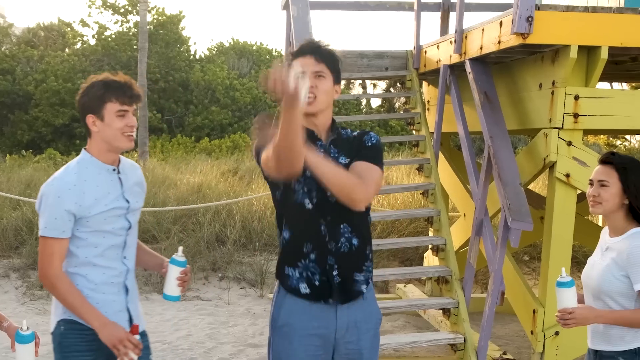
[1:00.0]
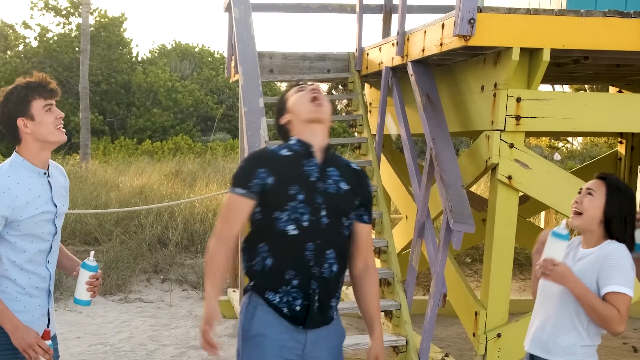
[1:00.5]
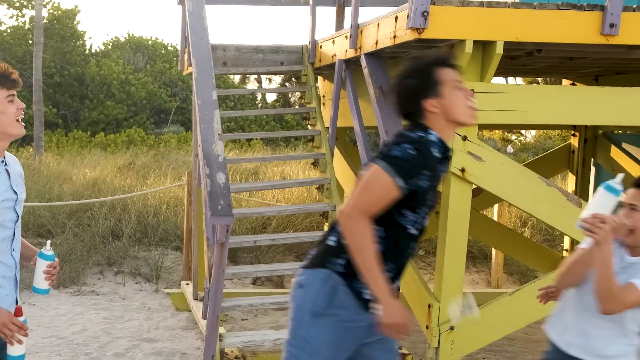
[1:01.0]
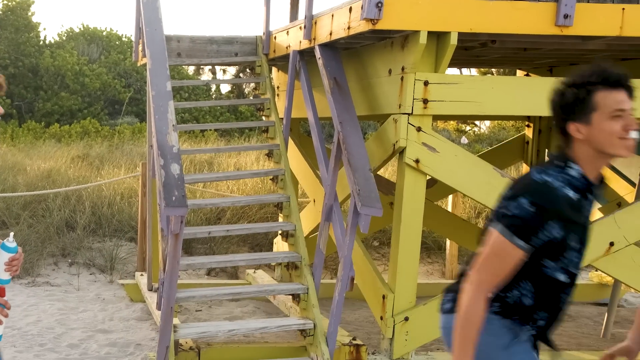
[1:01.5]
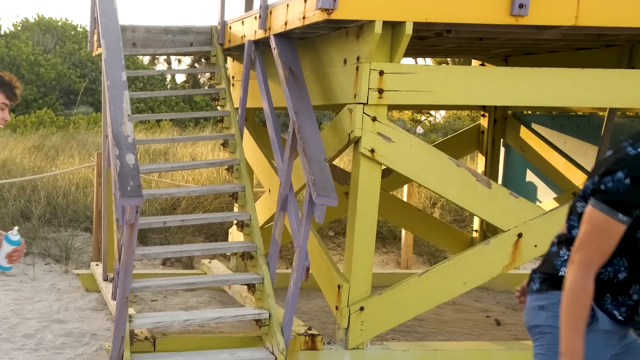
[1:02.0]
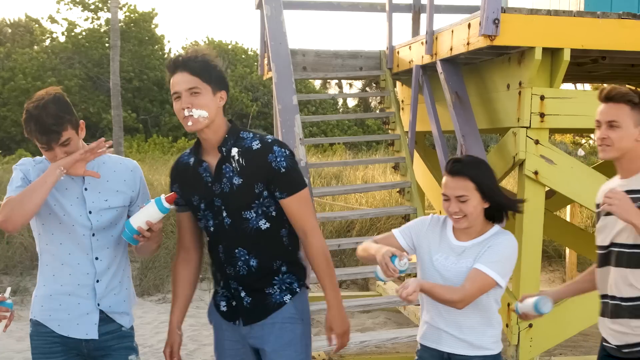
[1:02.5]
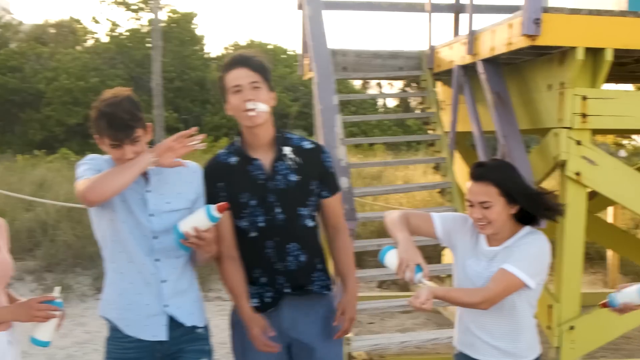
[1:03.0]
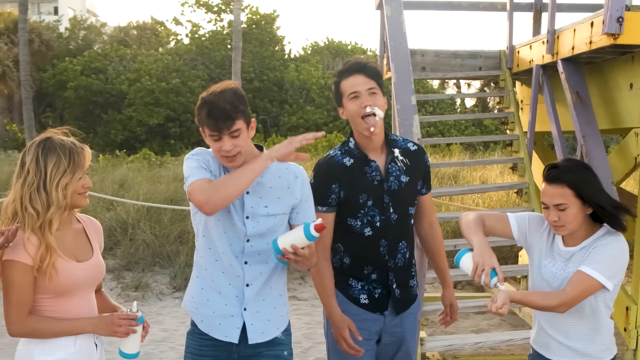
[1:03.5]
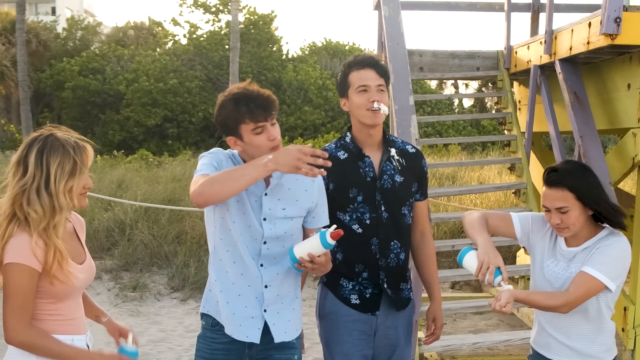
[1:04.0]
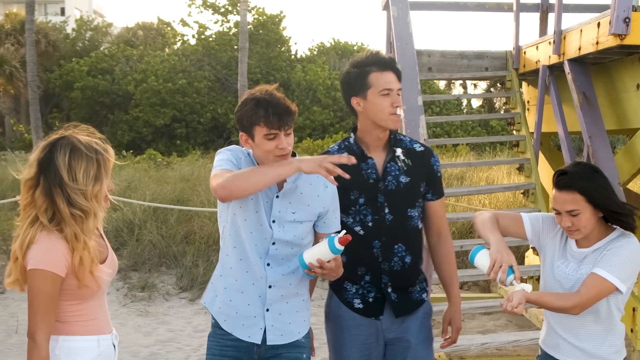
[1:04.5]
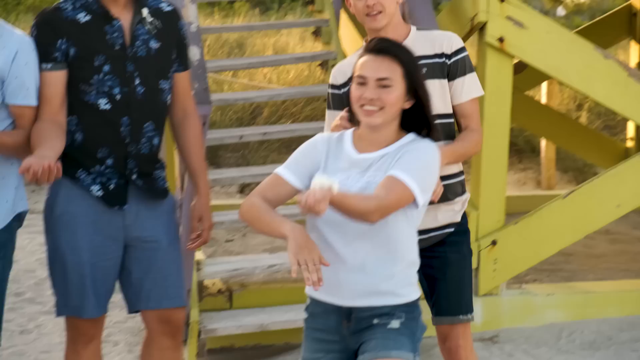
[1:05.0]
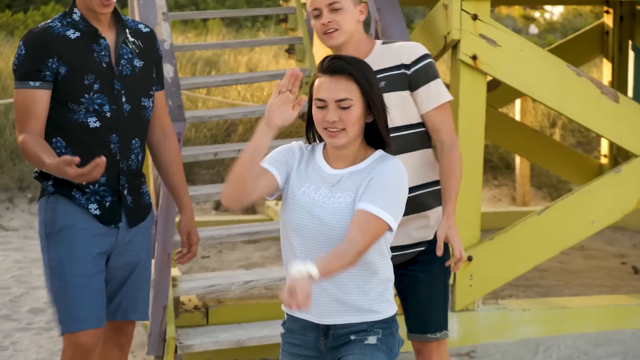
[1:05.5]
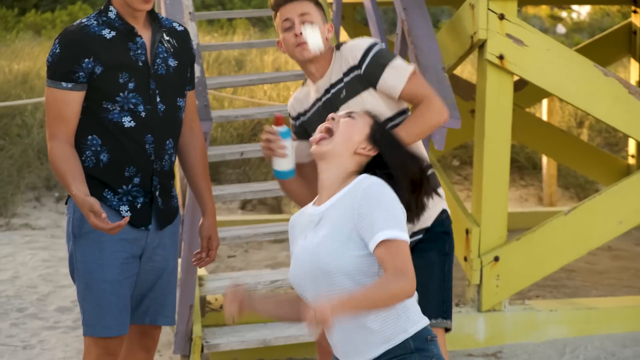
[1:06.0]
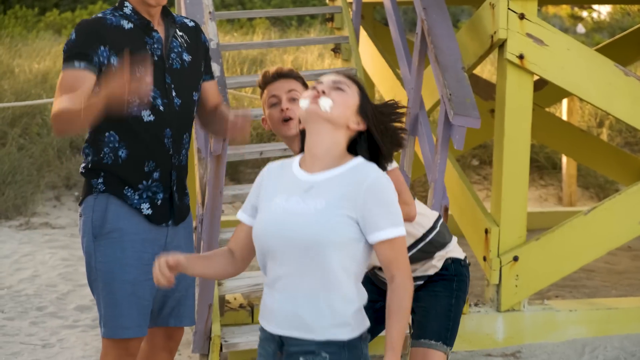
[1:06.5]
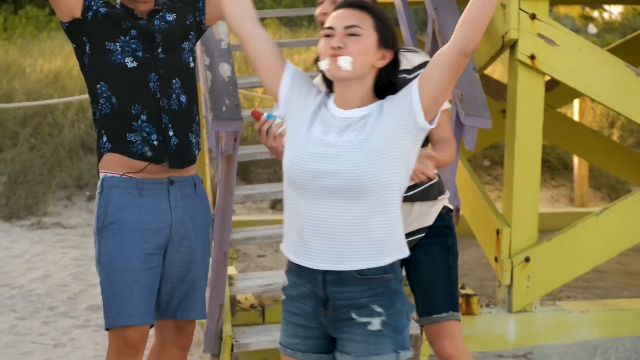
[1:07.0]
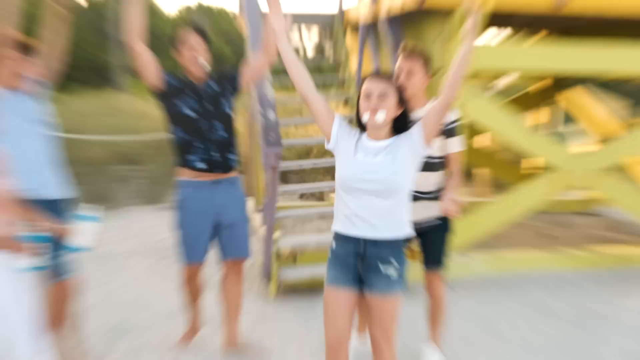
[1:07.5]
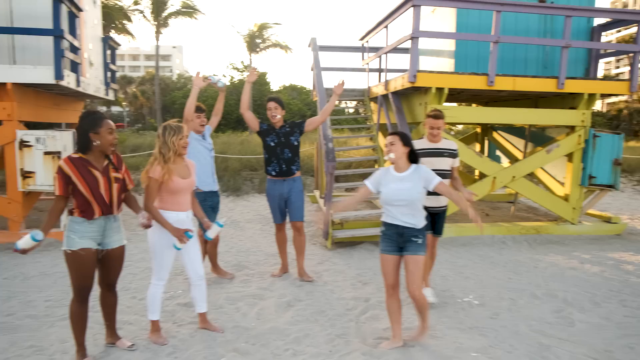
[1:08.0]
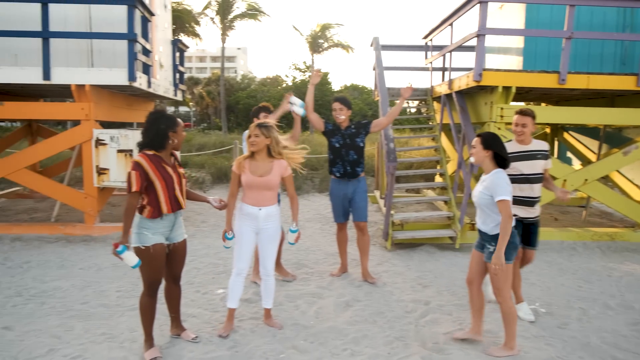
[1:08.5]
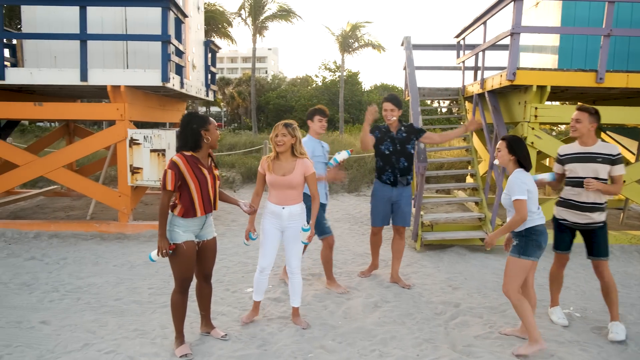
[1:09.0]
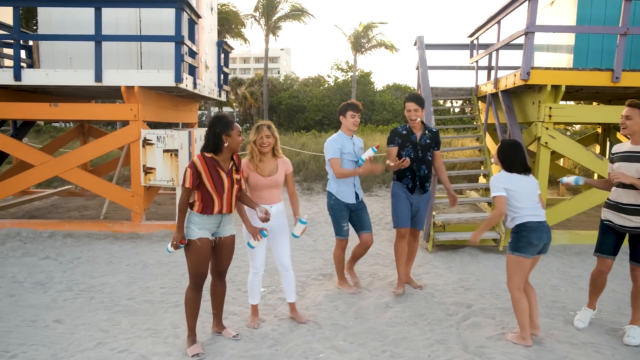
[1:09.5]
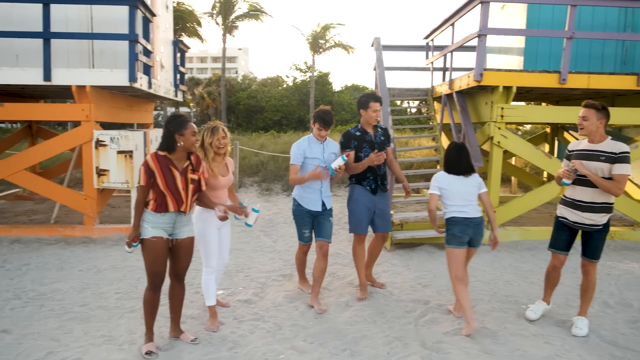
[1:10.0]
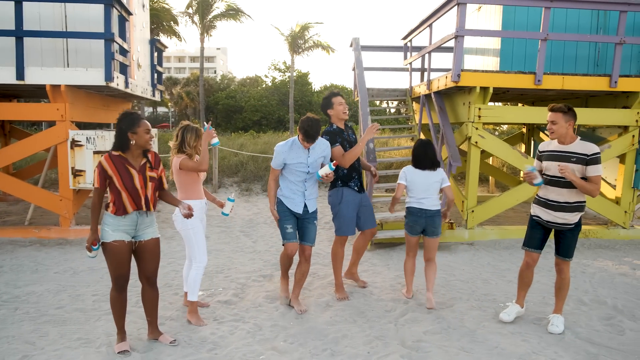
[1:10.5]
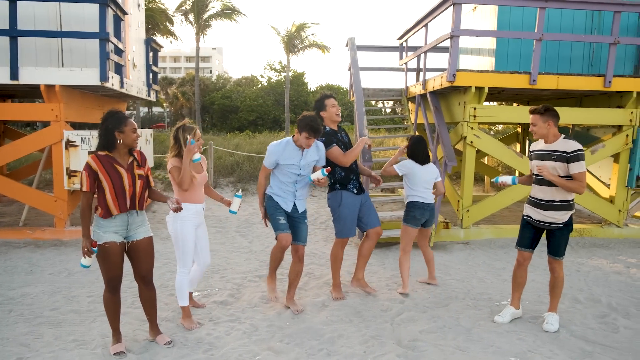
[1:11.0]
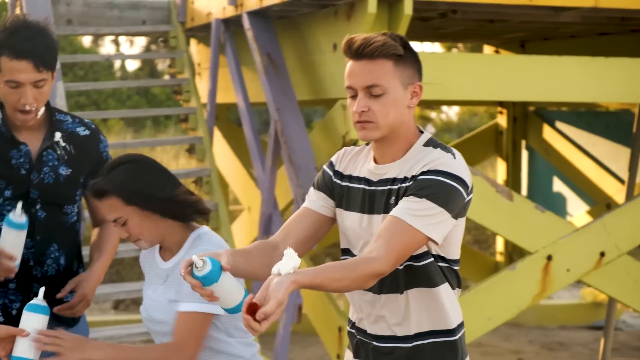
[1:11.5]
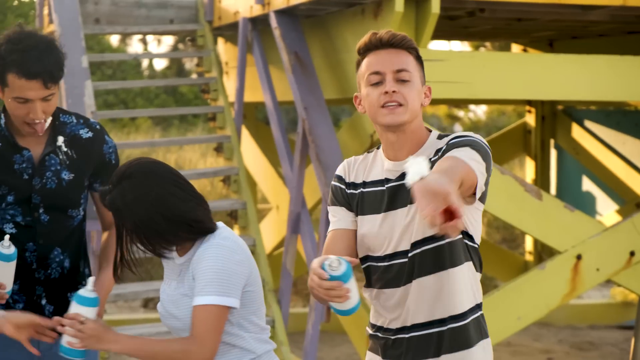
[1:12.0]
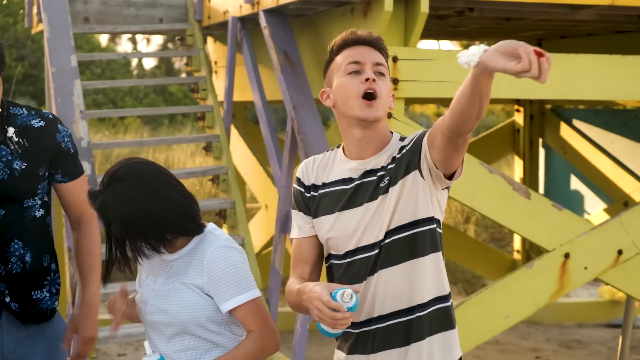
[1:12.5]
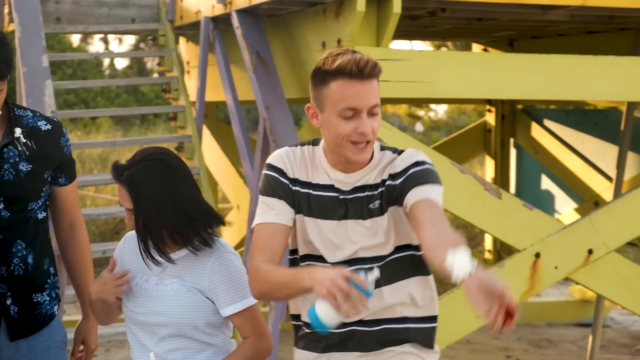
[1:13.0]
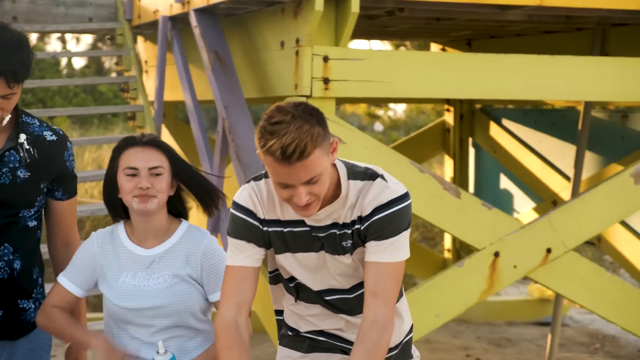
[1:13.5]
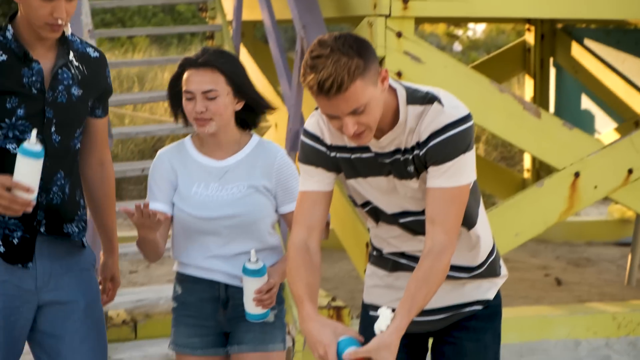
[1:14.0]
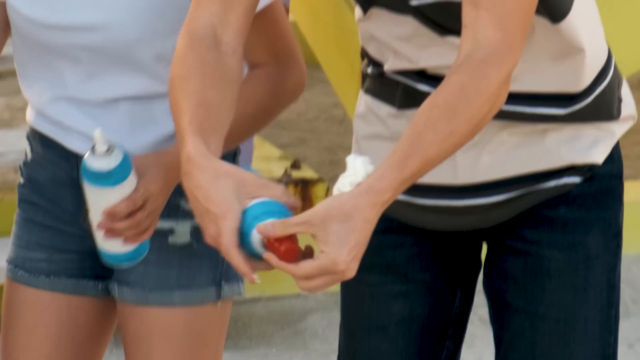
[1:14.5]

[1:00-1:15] Aaron has just raised his arm and stopped it so the whipped cream goes flying, and he does a little maneuver to catch it. He seems to catch it in his mouth, but it doesn't really land there: he has whipped cream on the top part of his mouth and on the side of his face. Next Haley puts whipped cream on the inside of her wrist, raises her arm, stops it with her other hand and captures the whipped cream in her mouth. She does a little victory gesture with her arms up; some of the whipped cream came down on her chin, so she wipes it off. Then it is the other host Damon's turn, and he puts whipped cream on the inside of his wrist. The other participants cheer everybody on as they try the challenge.